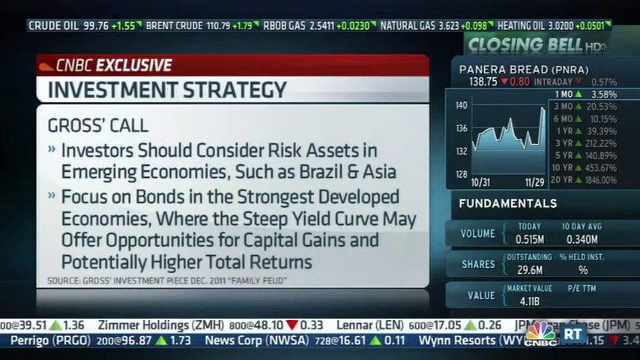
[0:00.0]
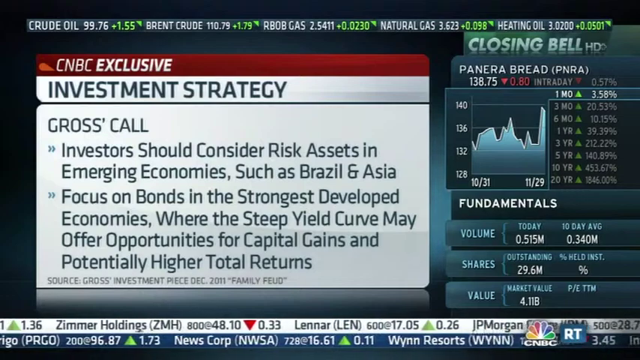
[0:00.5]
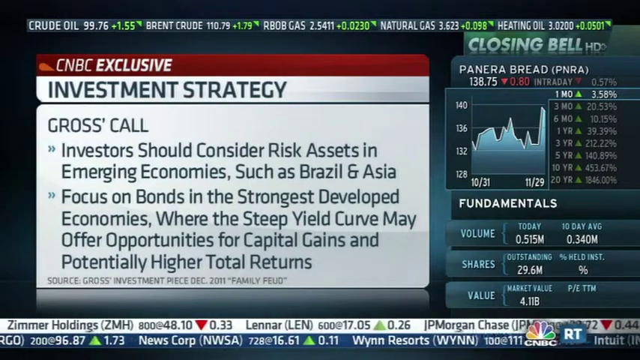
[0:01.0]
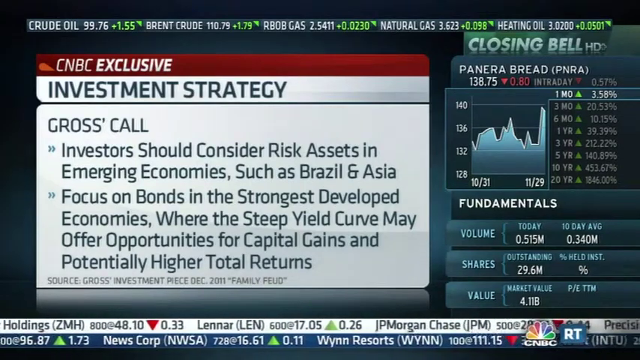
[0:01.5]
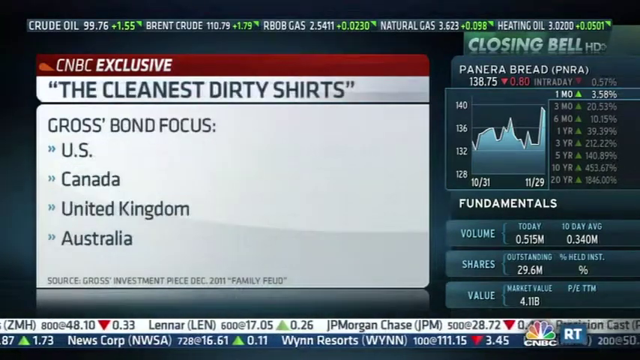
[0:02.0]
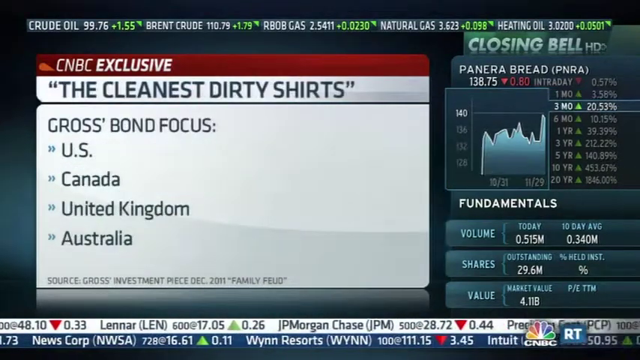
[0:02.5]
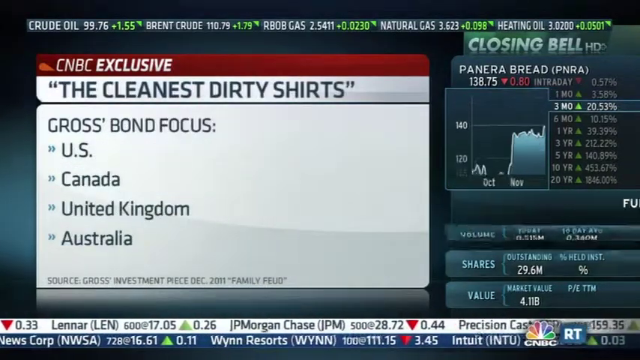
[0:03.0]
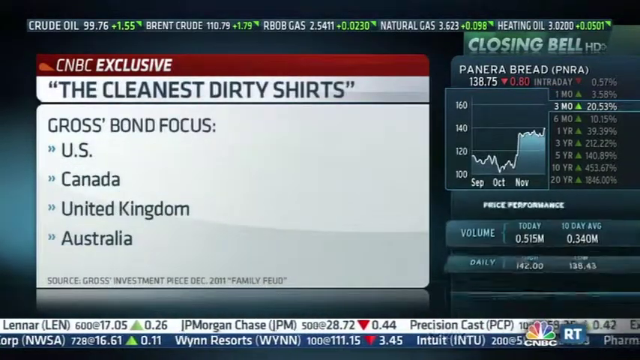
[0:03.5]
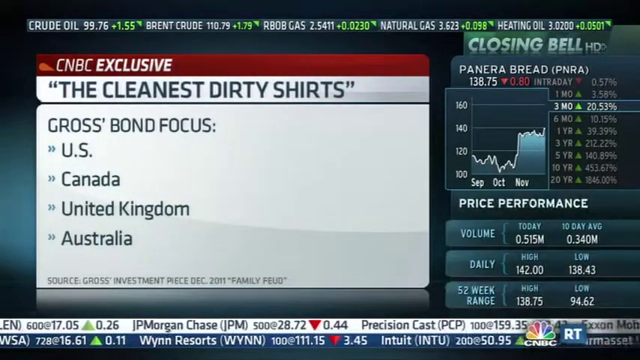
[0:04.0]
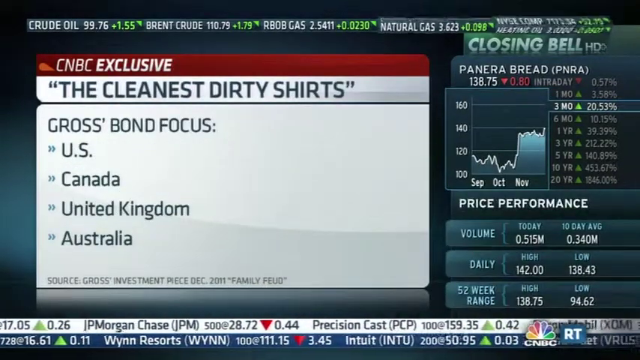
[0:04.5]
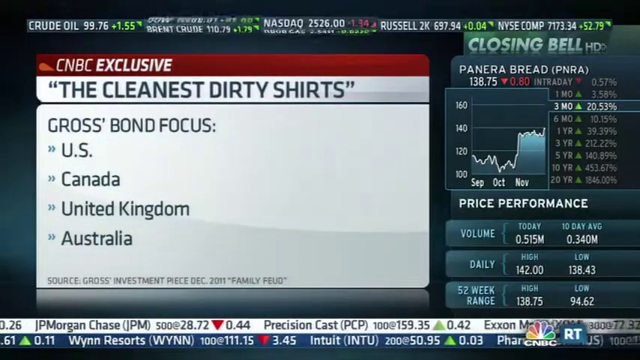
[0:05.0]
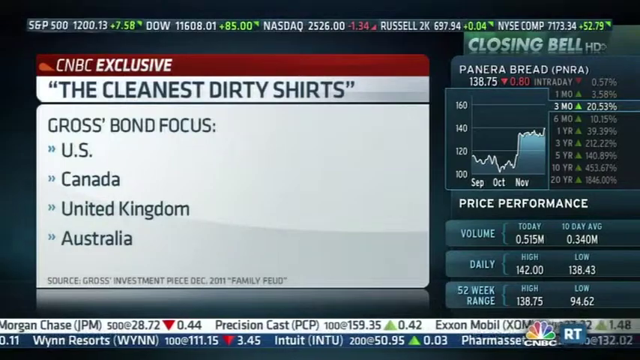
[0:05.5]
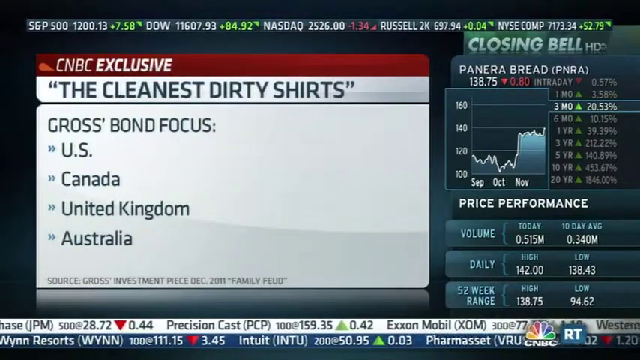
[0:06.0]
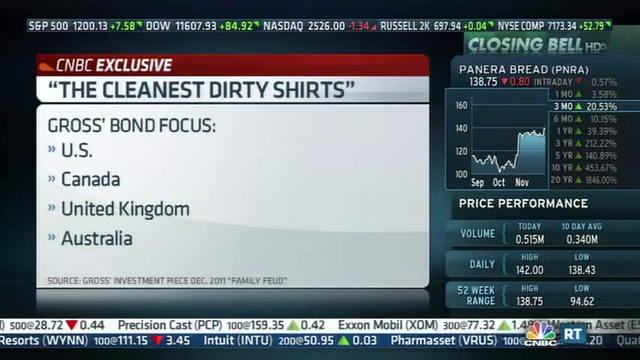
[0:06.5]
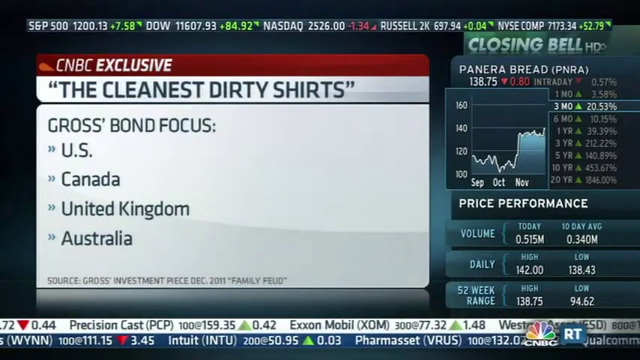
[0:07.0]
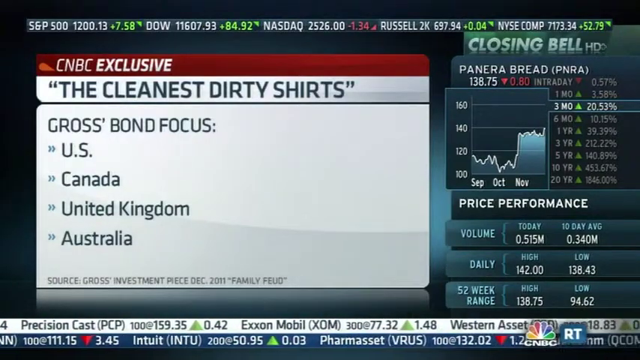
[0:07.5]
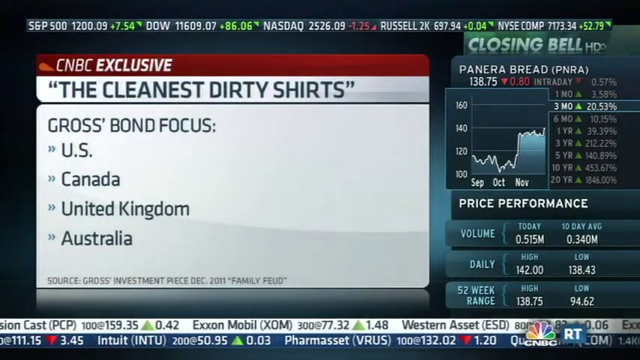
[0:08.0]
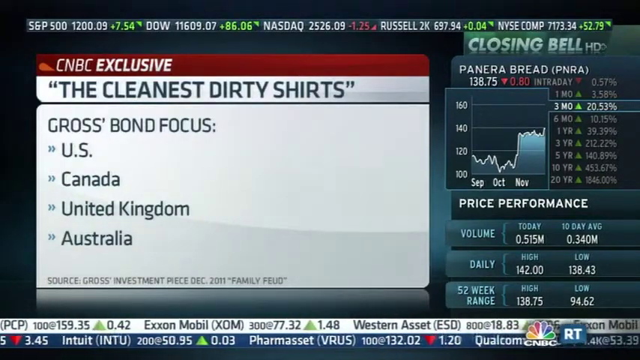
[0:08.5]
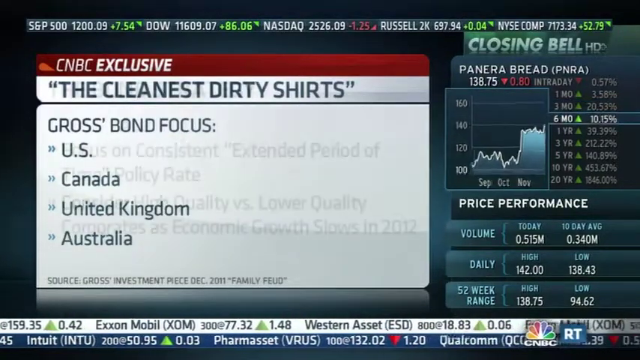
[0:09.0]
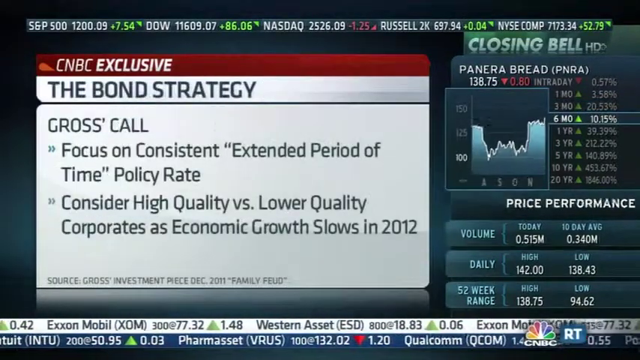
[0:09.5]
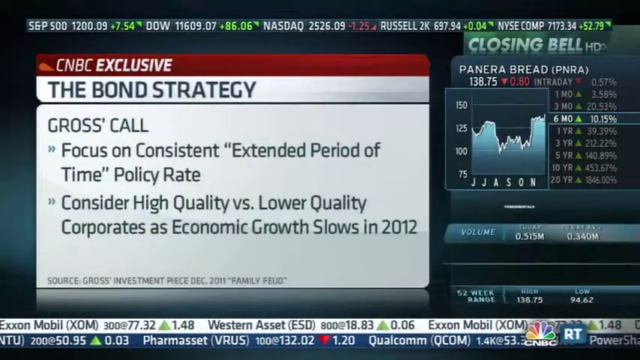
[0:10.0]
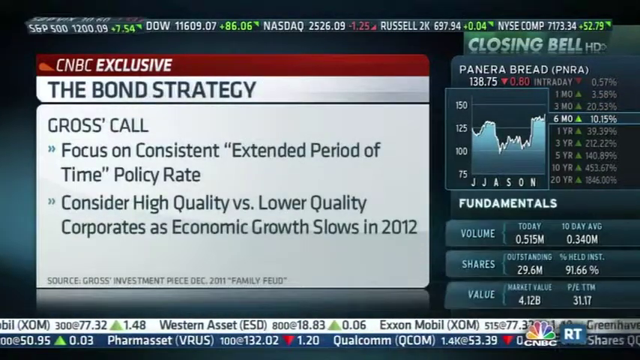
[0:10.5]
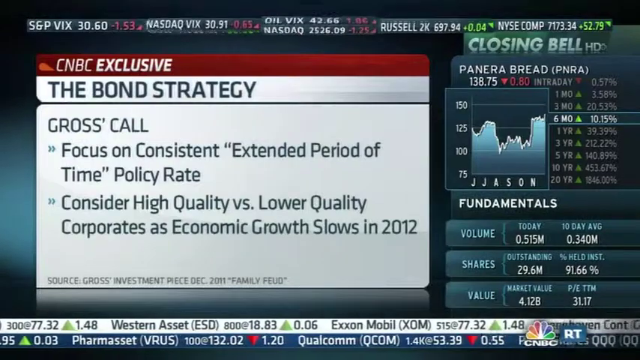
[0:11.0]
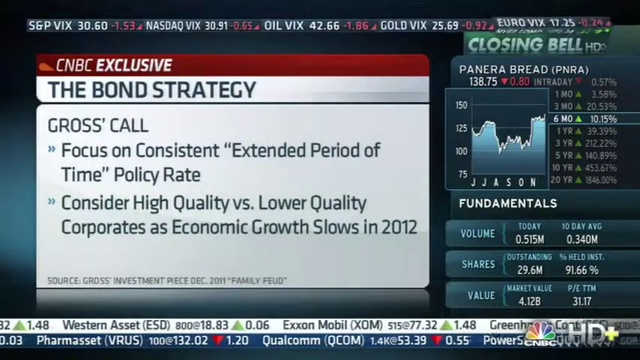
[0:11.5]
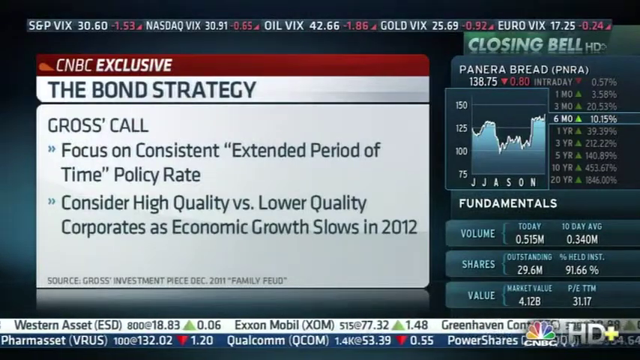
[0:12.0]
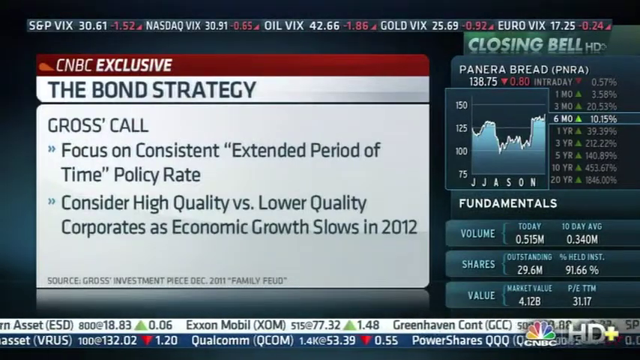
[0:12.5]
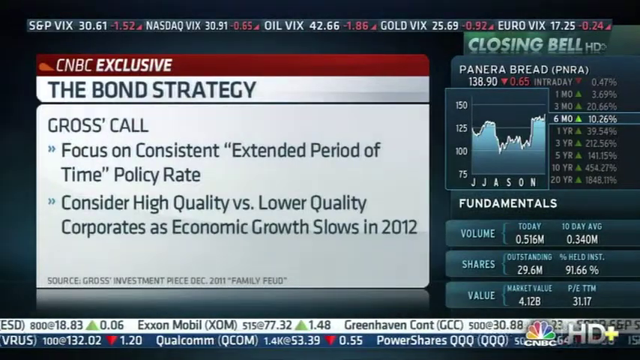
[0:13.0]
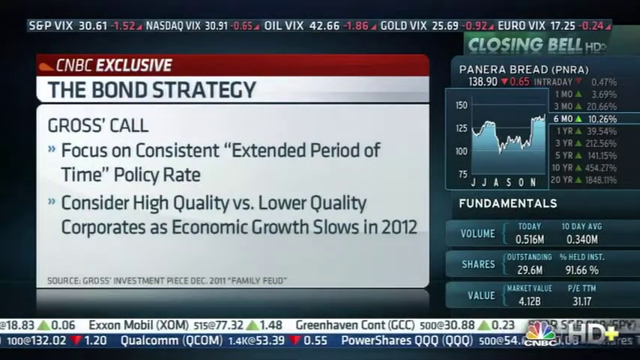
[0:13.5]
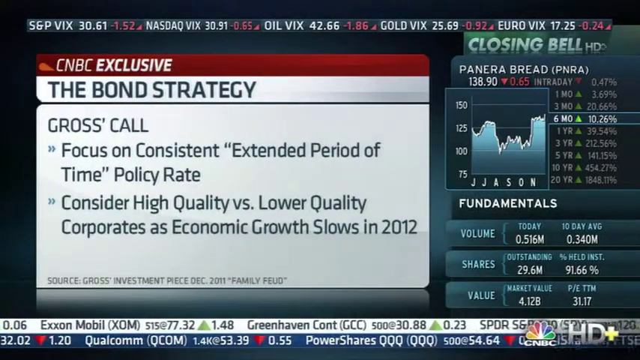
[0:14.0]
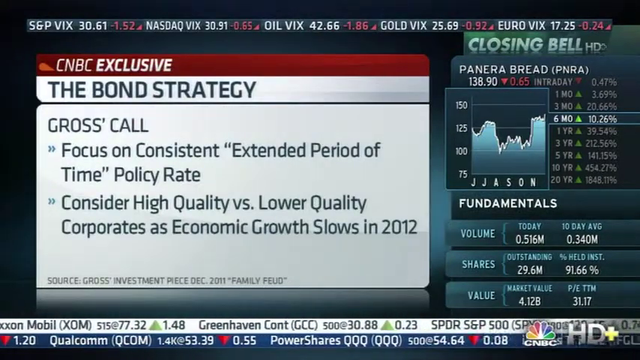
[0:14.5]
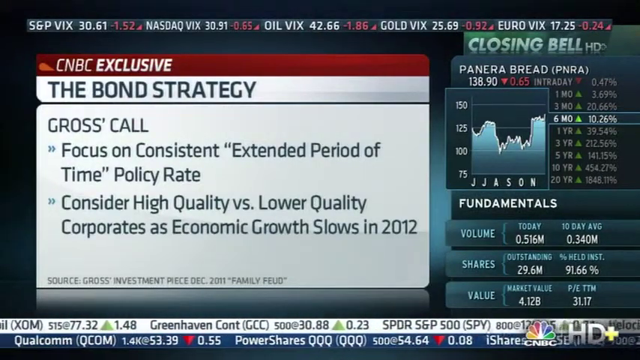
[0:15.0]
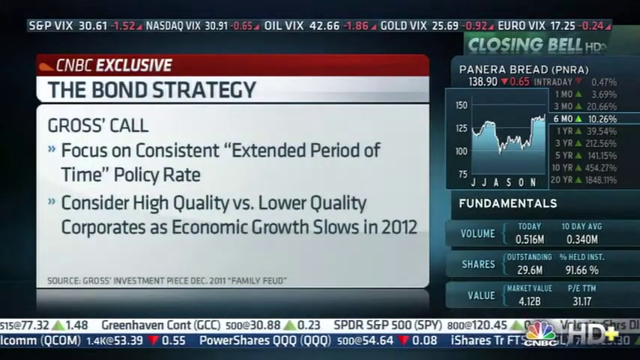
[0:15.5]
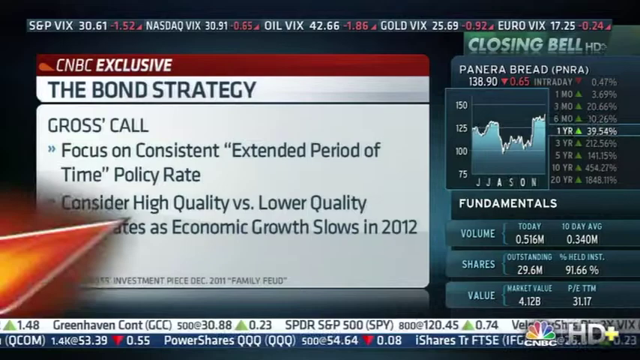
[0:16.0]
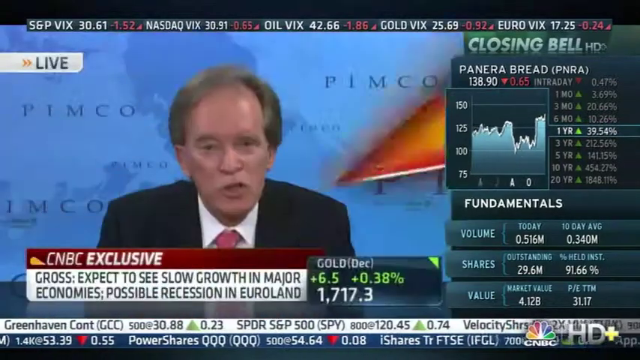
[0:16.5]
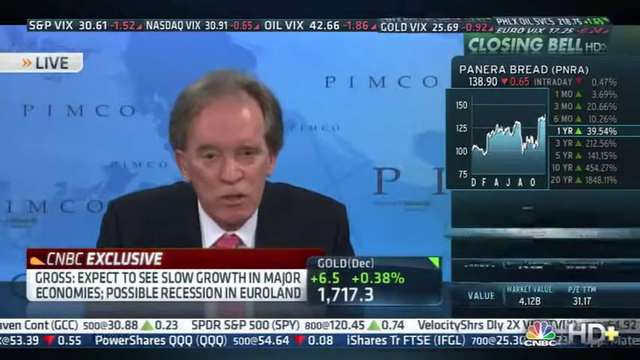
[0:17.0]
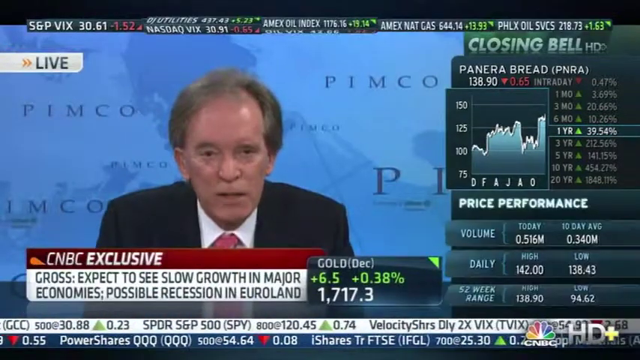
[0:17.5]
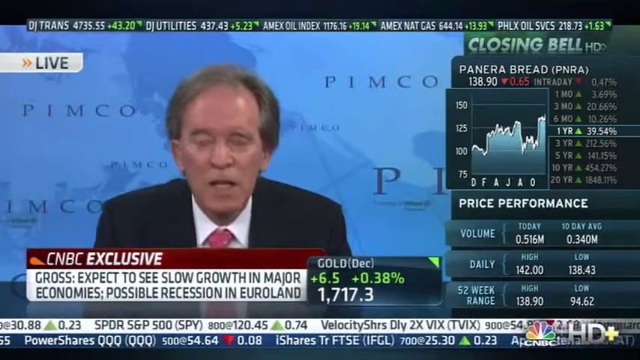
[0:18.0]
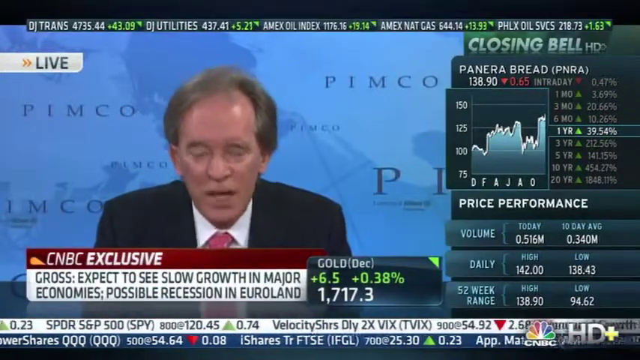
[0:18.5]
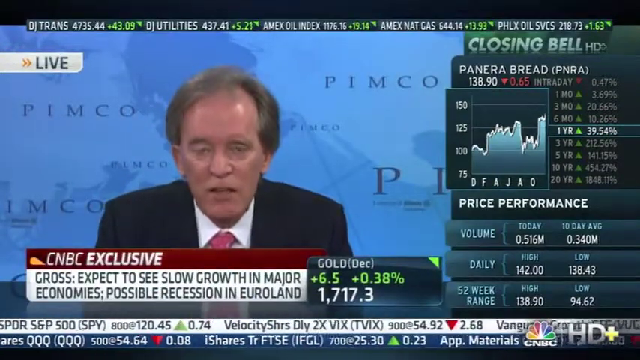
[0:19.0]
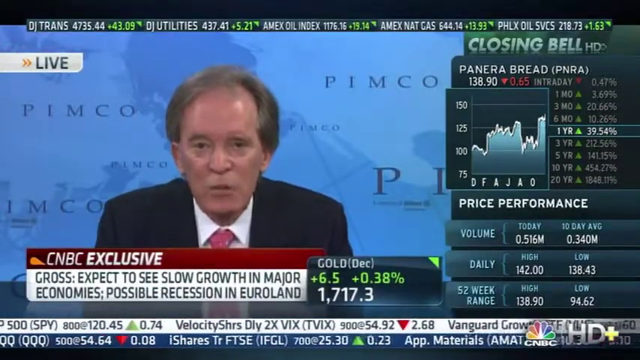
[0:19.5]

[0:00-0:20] A presentation screen, probably from a news channel, appears with a dark background. Scrolls run across the top and bottom from right to left: the top scroll has a black background with white and green letters, and the bottom scroll has a white background with black and red text. The main screen in the center has a split-screen layout with a text overlay. The left portion is titled "investment strategy" on a white background, with "CNBC exclusive" written above it on a red background. Below the title, on a white background, content titled "gross call" is written as two pointers that look like bullets with a double arrow; the first pointer has two lines and the second has four. On the right side are some graphics and data titled "fundamentals". The left content then changes to a title, "The Cleanest Dirty Shirts", in double quotes, with "gross-bond focus" below it and four pointers, "US", "Canada", "United Kingdom" and "Australia", written one by one. The graphs and data on the right side change. The left content changes again to a new title, "bond strategy", with "gross call" below it and two left-aligned pointers of two lines each. The screen then transitions to a new screen where the right panel and the scrolls stay the same, and the left side now shows a man facing the camera. There is a live tag in the left corner. The red banner at the bottom says "CNBC exclusive", and below it, on a white background, is the text "gross: expect to see slow growth in major economies, possible recession in Euro land". A small graphic shows the price of gold as 1717.3 with a slight increase percentage. The man wears a formal shirt, and only the portion up to his shirt collar is visible. The background behind him is a map-like image on blue with "PIMCO" on it.